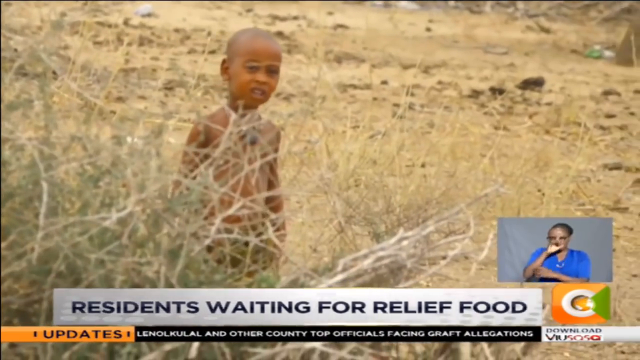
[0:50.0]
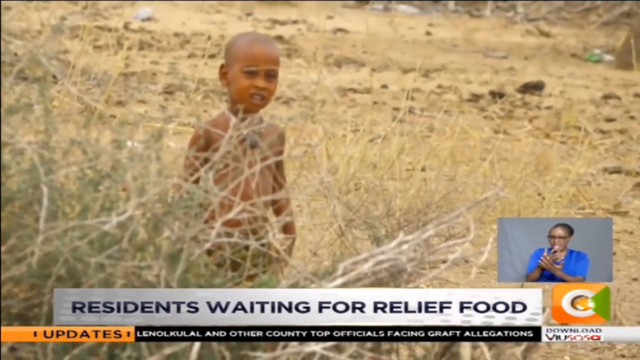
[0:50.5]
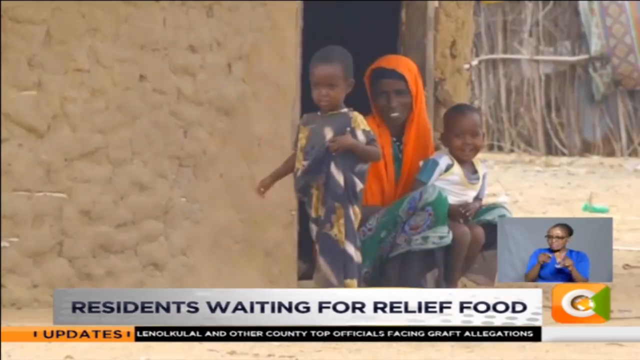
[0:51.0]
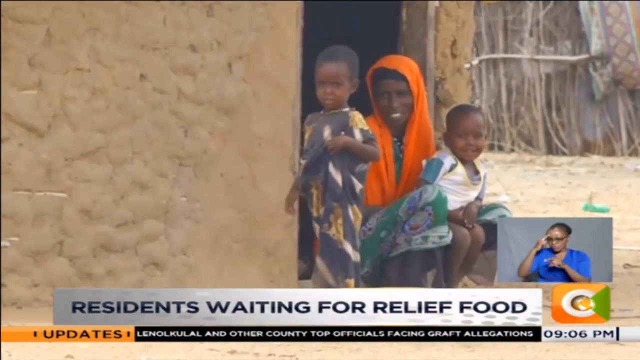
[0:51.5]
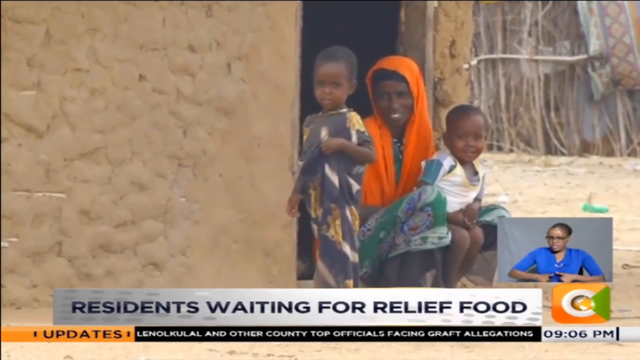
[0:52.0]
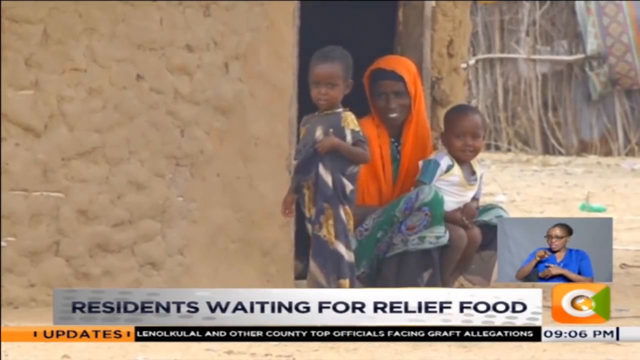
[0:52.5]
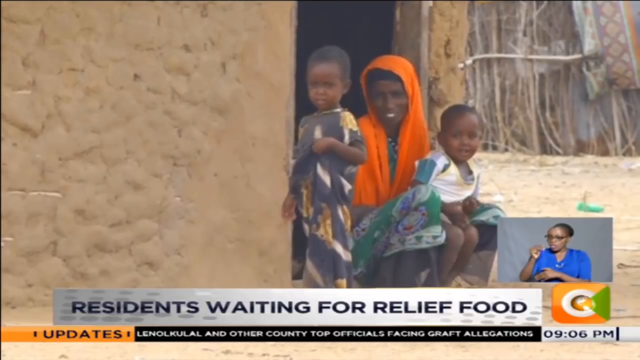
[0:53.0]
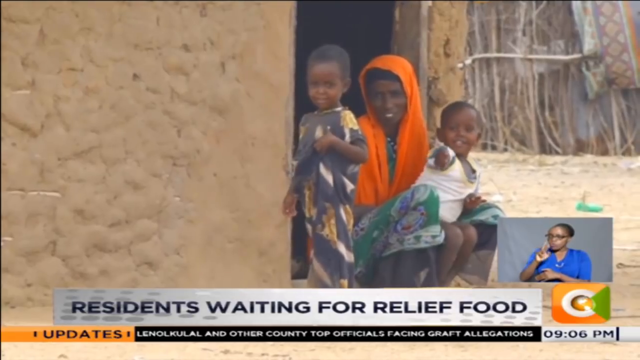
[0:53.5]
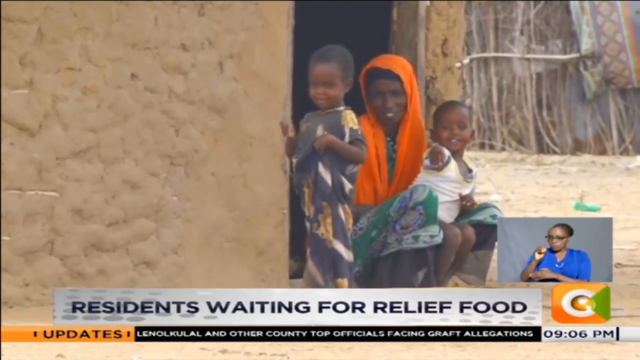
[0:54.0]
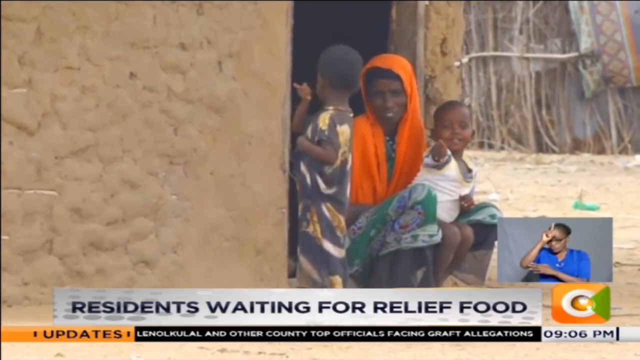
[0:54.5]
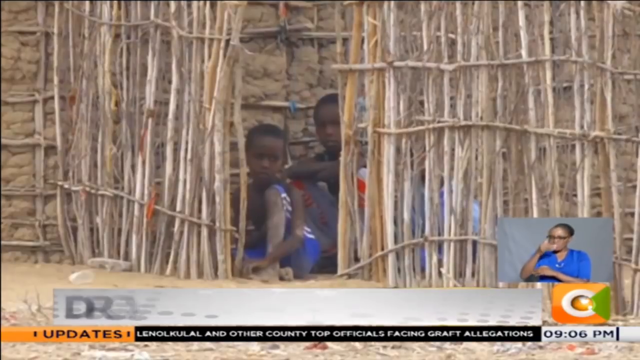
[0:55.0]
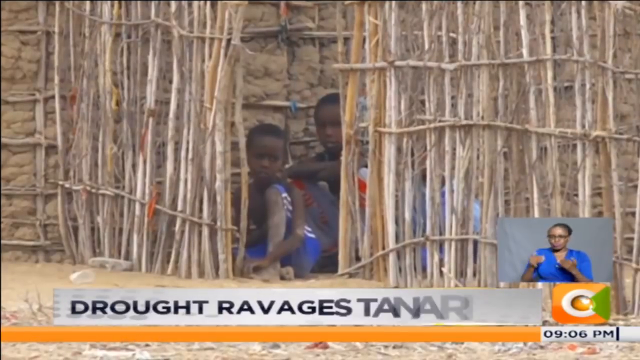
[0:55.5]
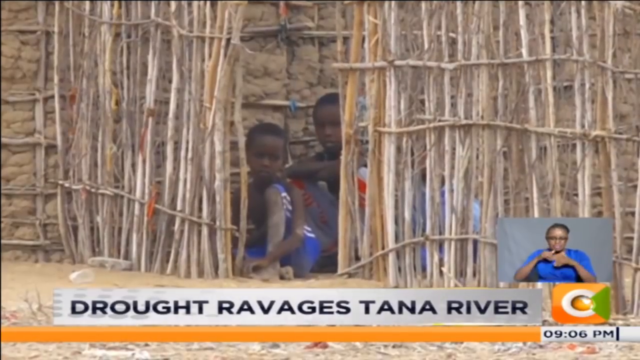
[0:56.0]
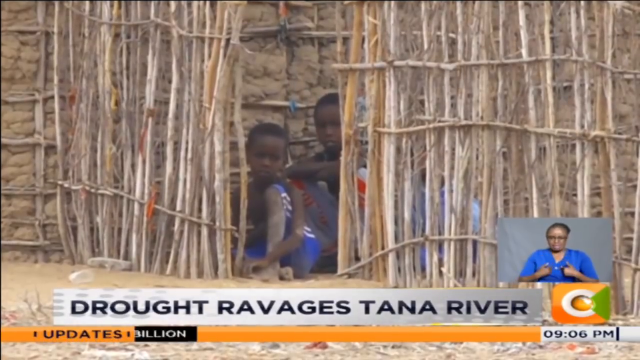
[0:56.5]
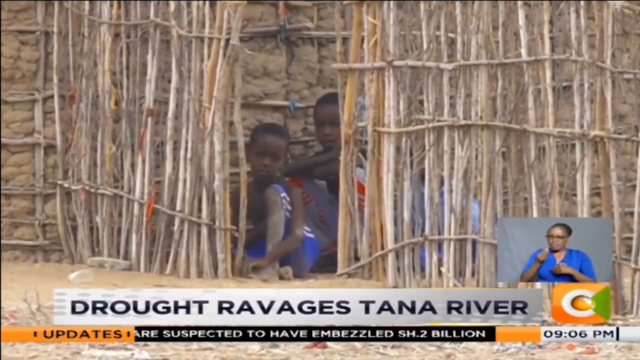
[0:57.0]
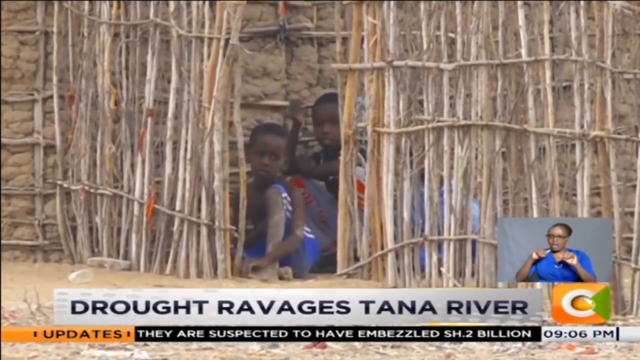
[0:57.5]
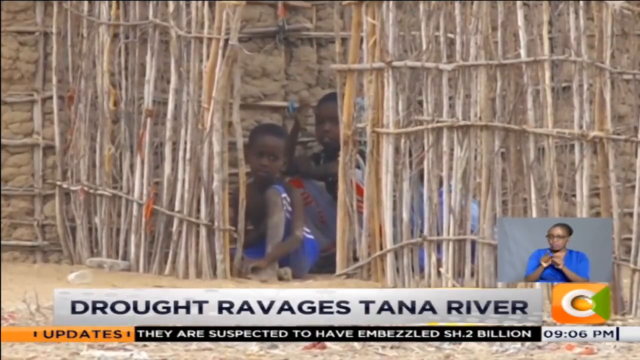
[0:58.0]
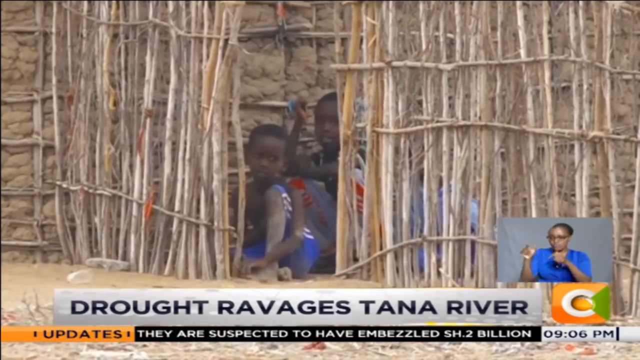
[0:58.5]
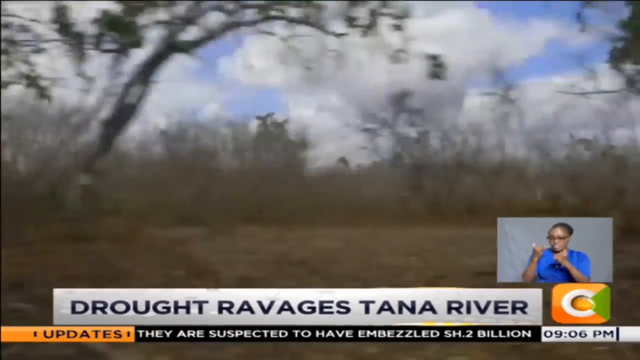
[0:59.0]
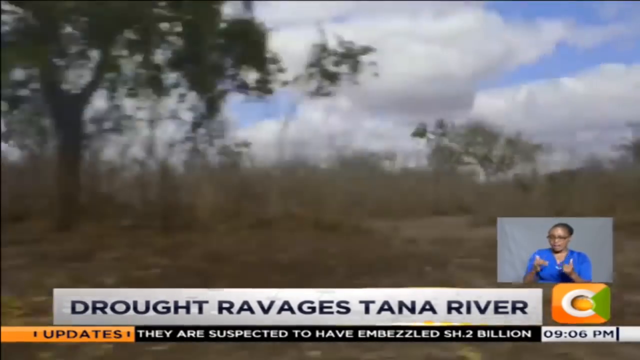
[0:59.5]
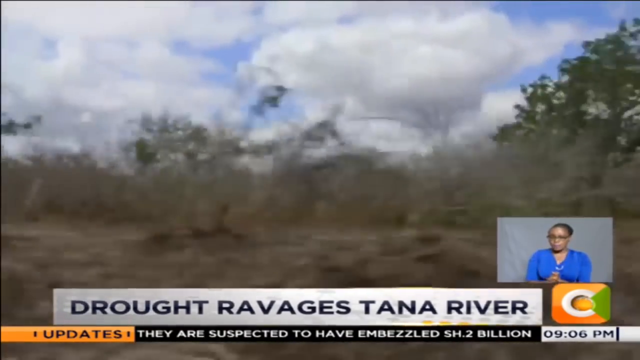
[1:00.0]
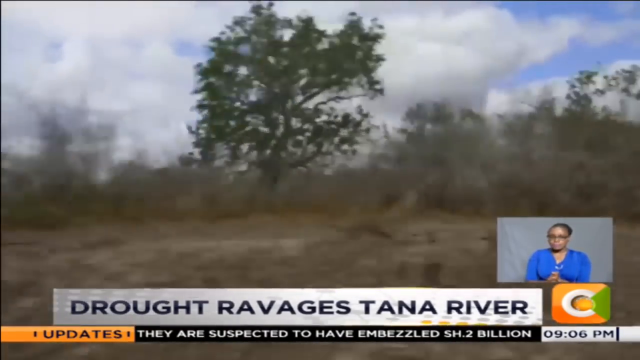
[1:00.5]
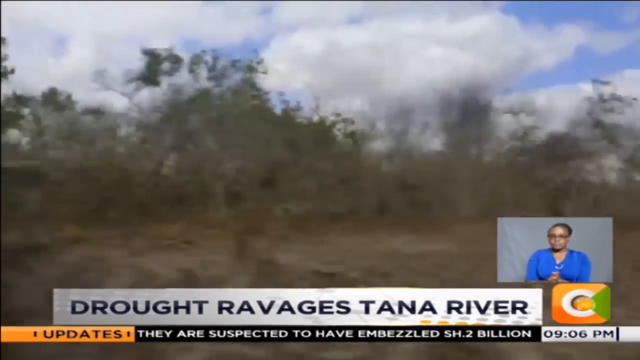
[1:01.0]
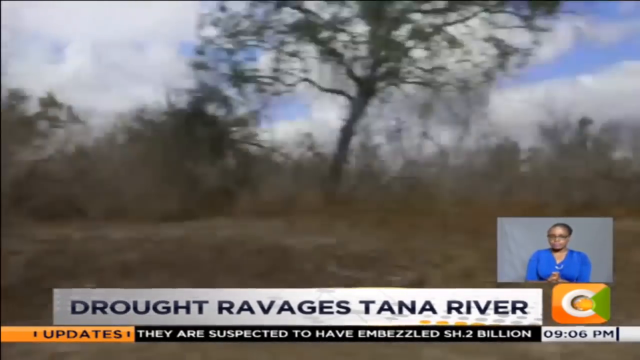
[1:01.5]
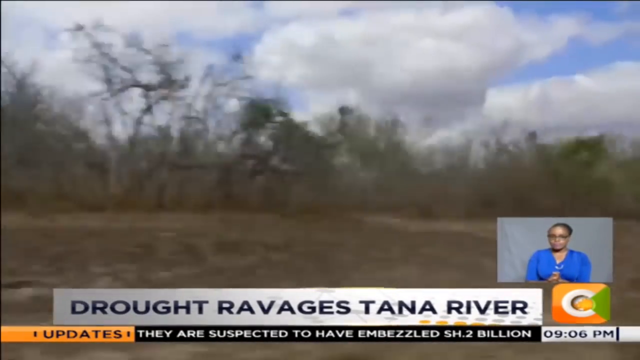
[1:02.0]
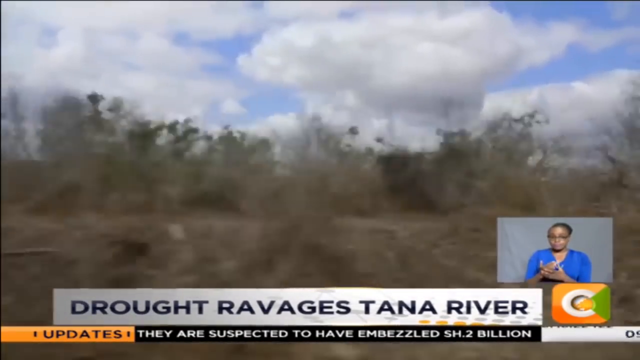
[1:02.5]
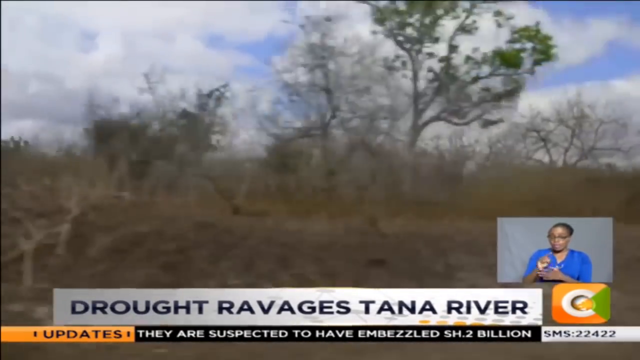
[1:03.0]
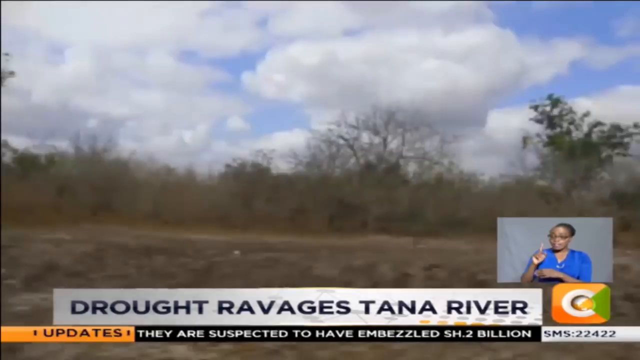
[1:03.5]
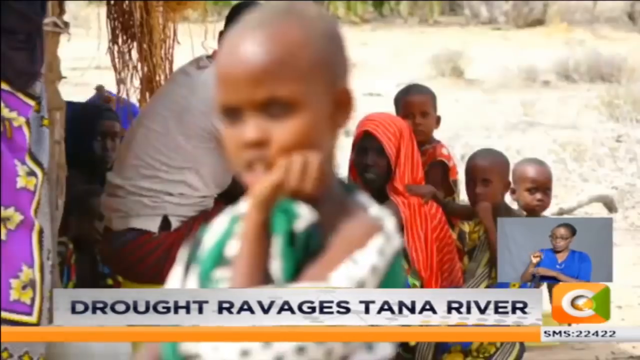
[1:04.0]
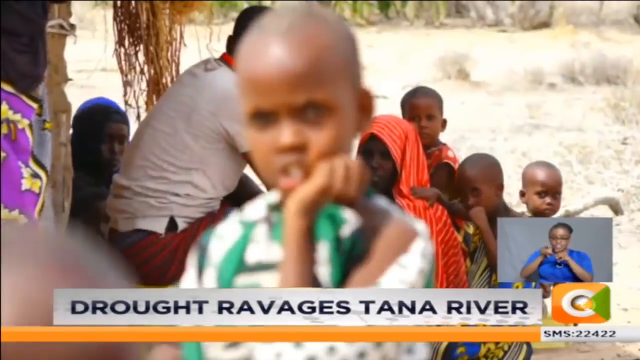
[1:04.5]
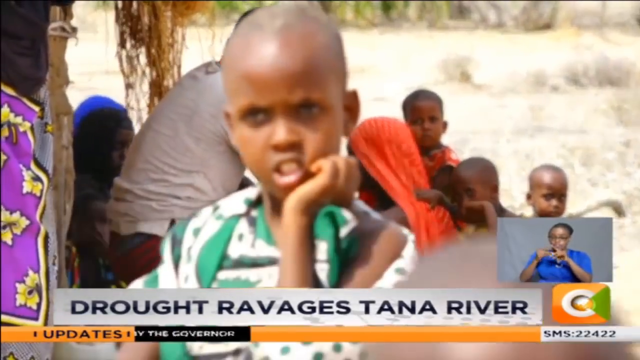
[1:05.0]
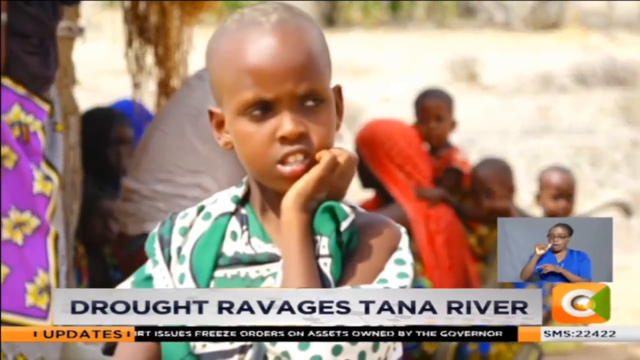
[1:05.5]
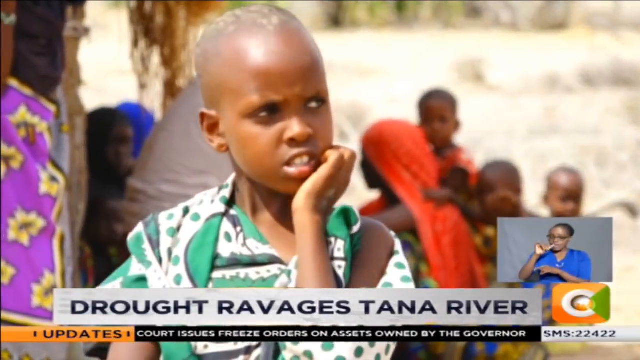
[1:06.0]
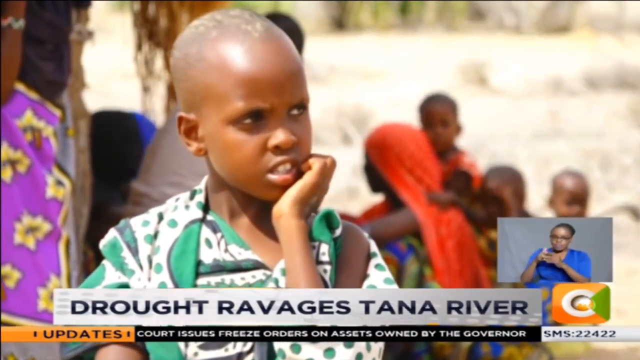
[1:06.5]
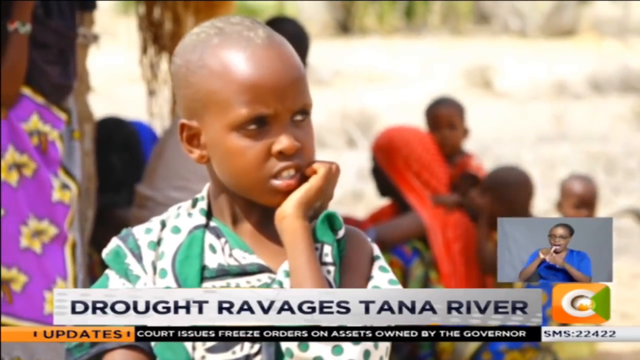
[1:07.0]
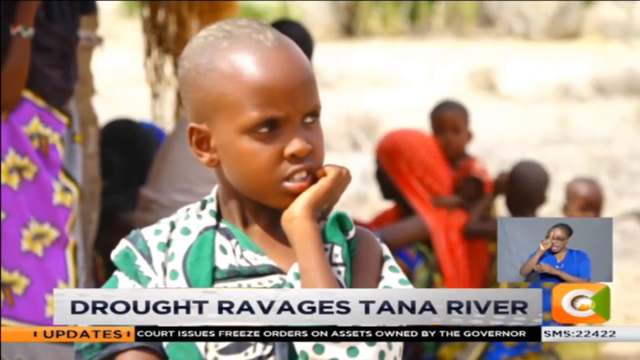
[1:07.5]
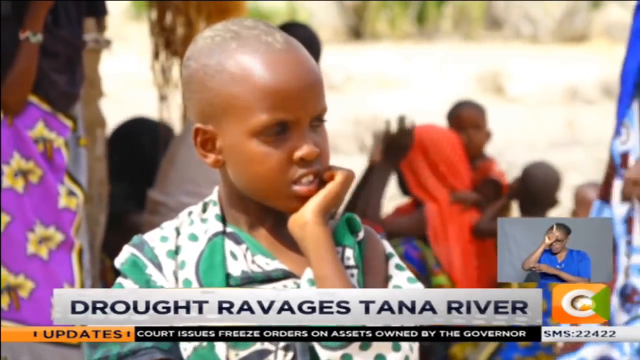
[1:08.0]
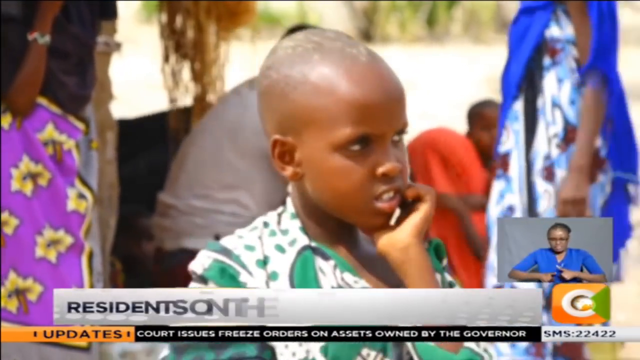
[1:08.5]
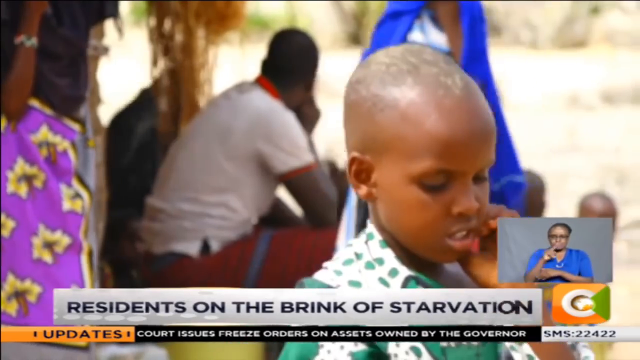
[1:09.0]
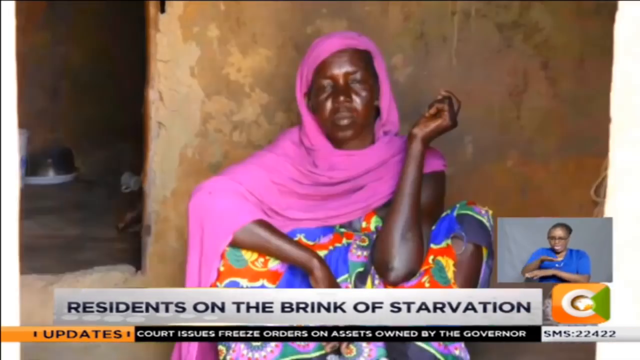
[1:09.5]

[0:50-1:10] Various kids in the affected region are shown. The first is somewhat behind a bush, looking around almost as if playing hide-and-seek. Then a mother with her two kids is outside what looks to be some type of hut; they look very famished. The mother wears an orange shawl, and the kids seem to be smiling and excited, looking around. Another group of kids in a bamboo-style hut looks back at the camera and waves a little. The scene cuts to the camera in a driving car, looking out at the side of the road as it passes. Next, a kid up close seems concerned, while others in the background sit down, playing with each other. The people filmed seem to smile sometimes, but for the most part seem very distressed.